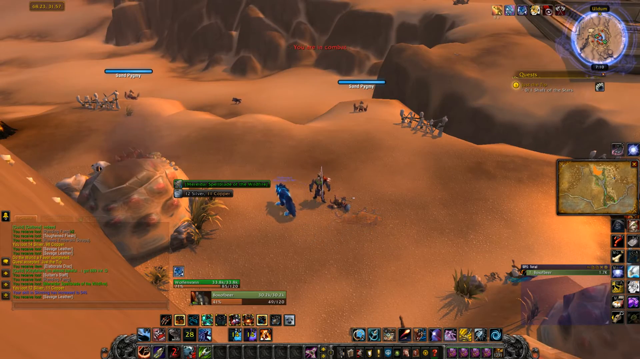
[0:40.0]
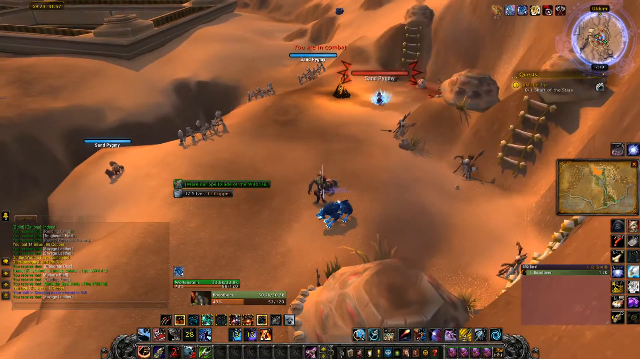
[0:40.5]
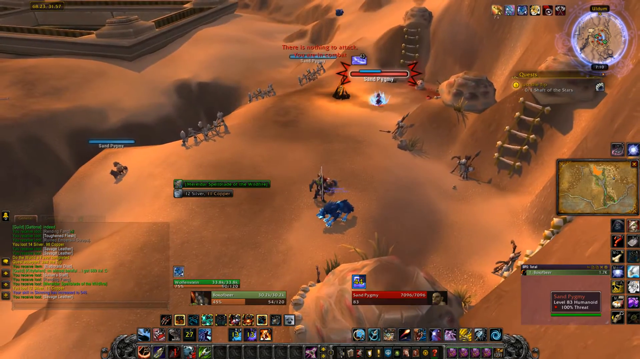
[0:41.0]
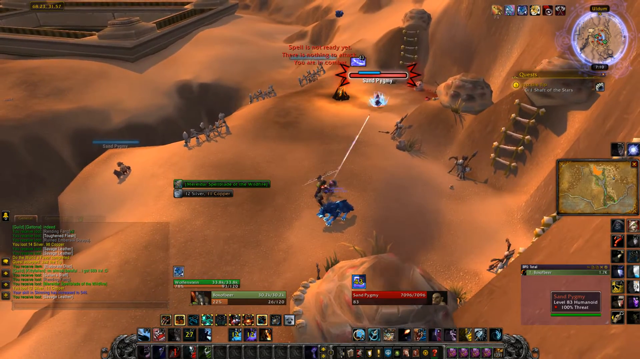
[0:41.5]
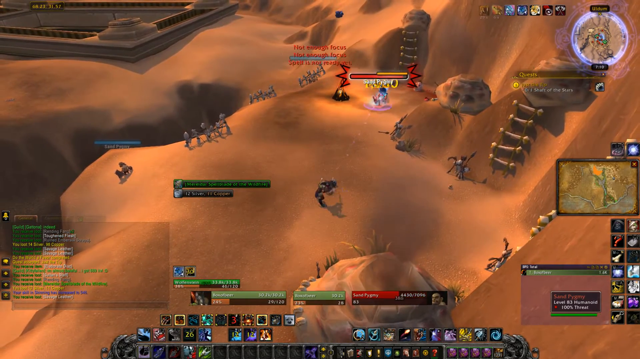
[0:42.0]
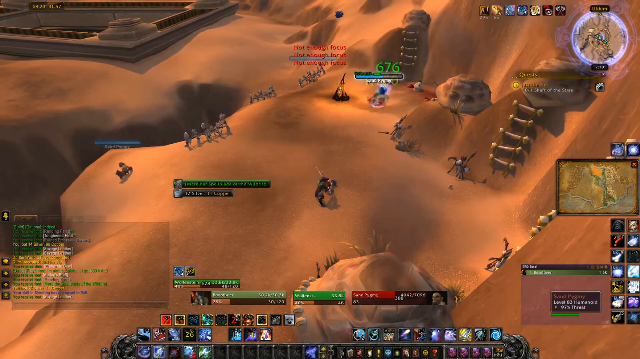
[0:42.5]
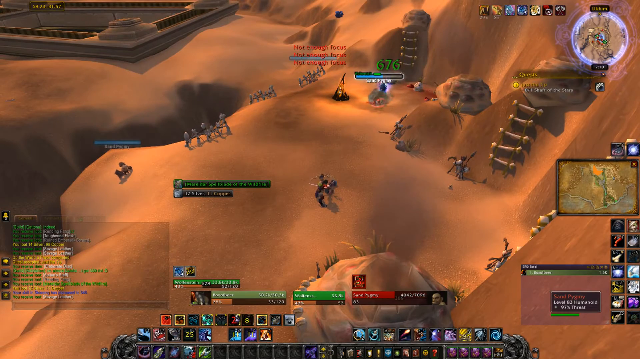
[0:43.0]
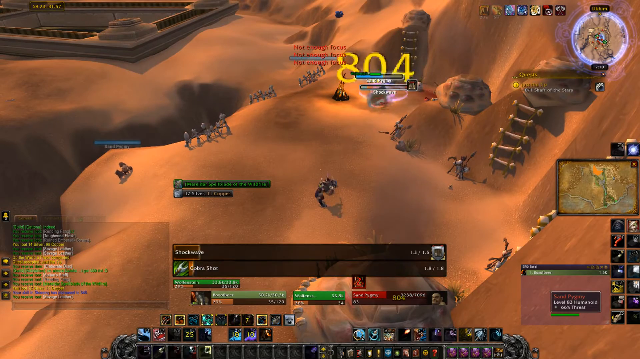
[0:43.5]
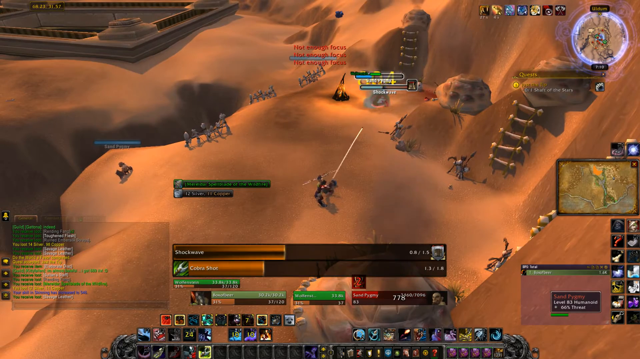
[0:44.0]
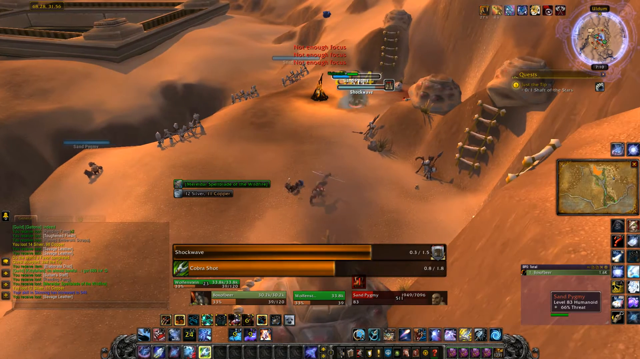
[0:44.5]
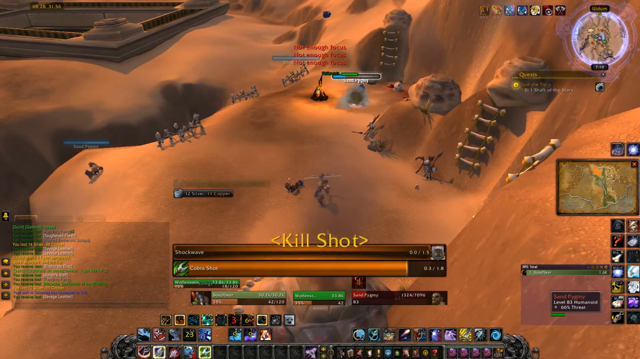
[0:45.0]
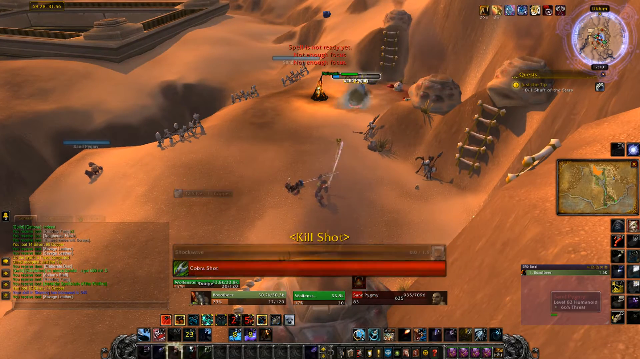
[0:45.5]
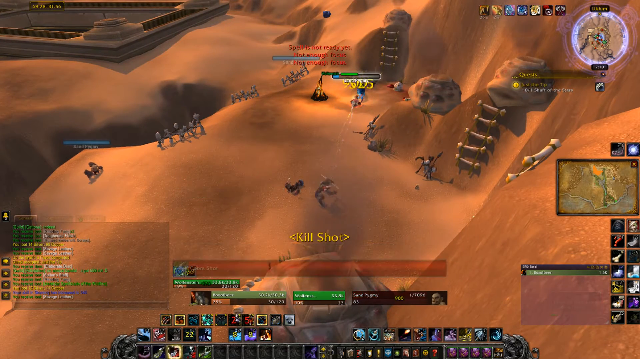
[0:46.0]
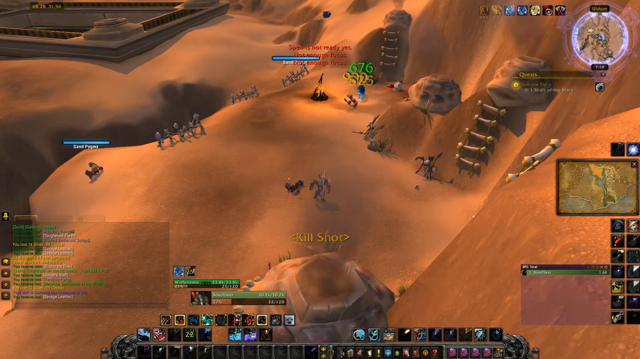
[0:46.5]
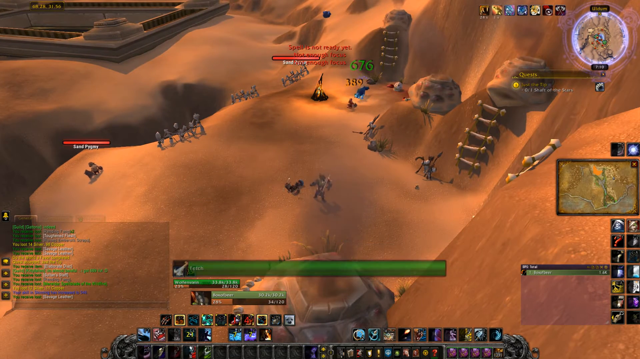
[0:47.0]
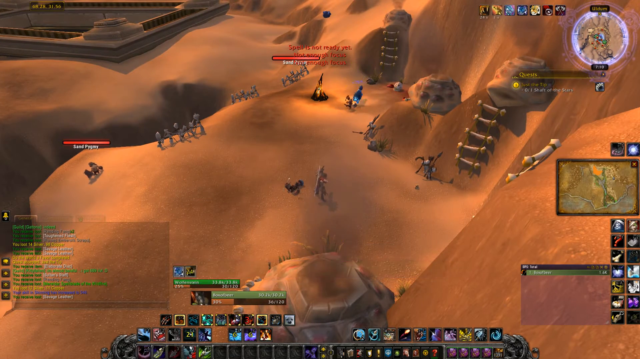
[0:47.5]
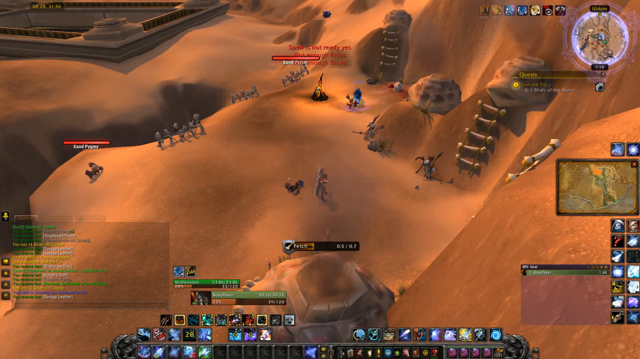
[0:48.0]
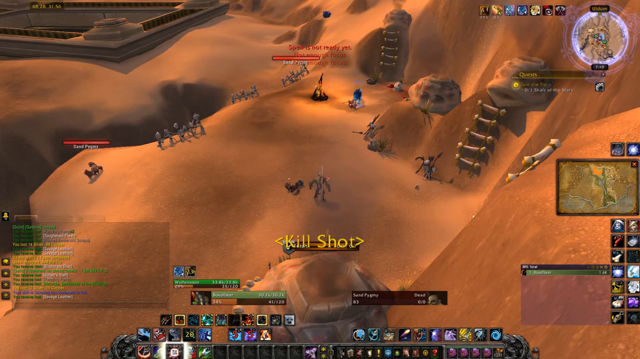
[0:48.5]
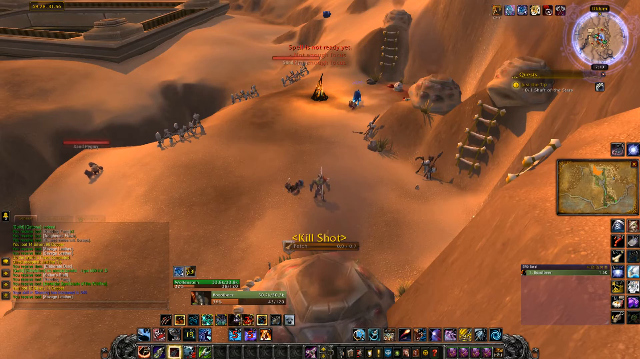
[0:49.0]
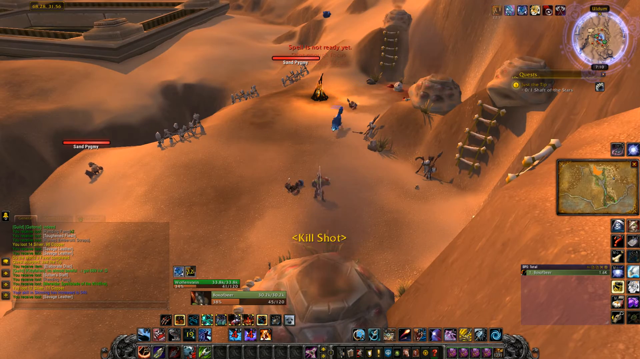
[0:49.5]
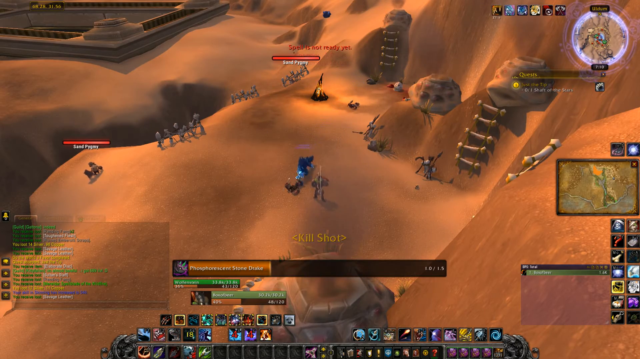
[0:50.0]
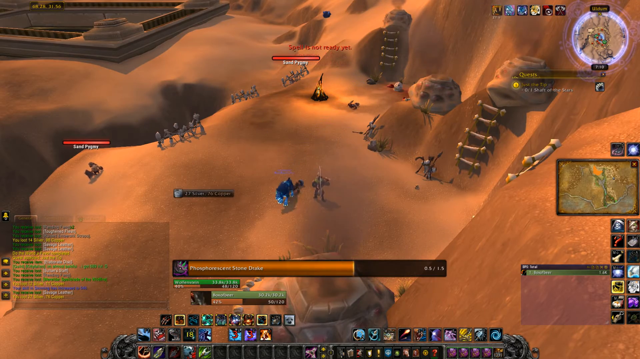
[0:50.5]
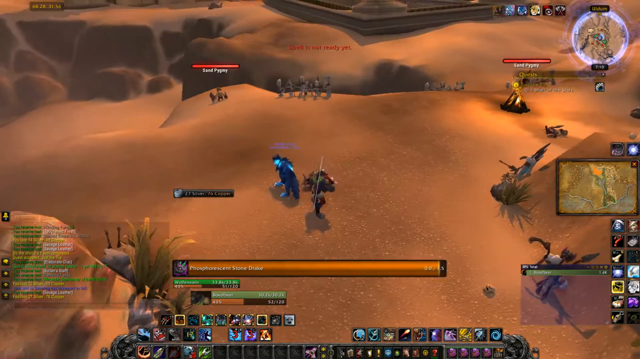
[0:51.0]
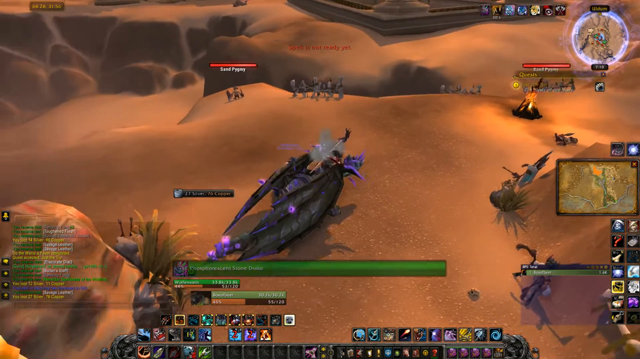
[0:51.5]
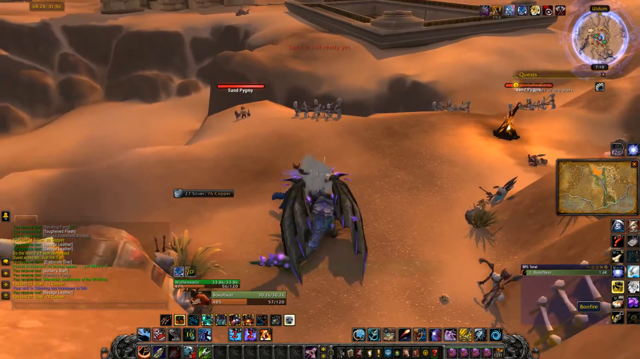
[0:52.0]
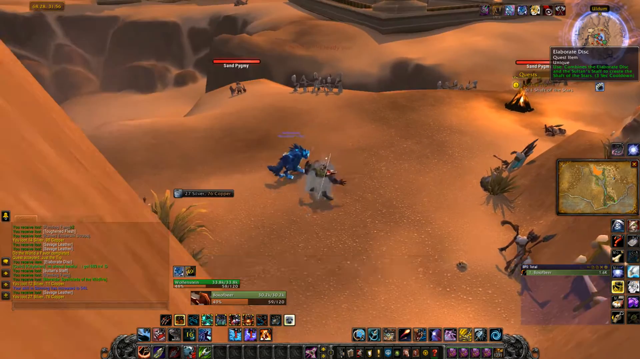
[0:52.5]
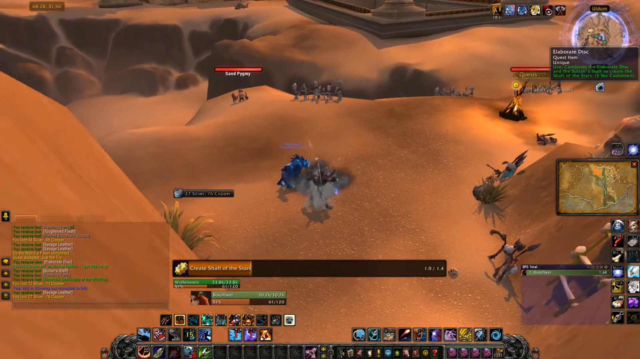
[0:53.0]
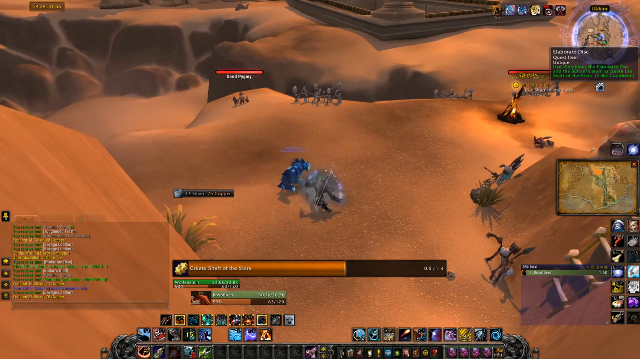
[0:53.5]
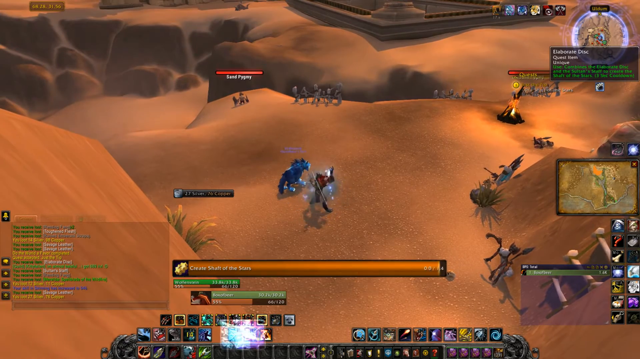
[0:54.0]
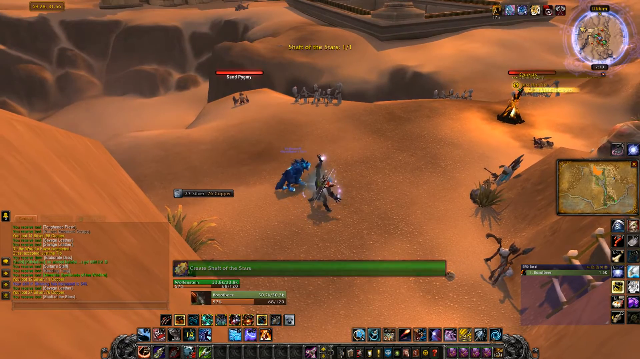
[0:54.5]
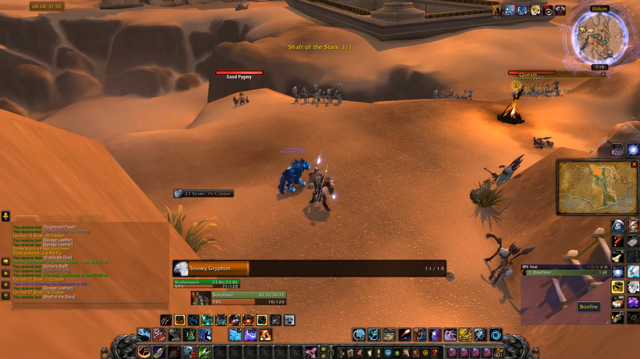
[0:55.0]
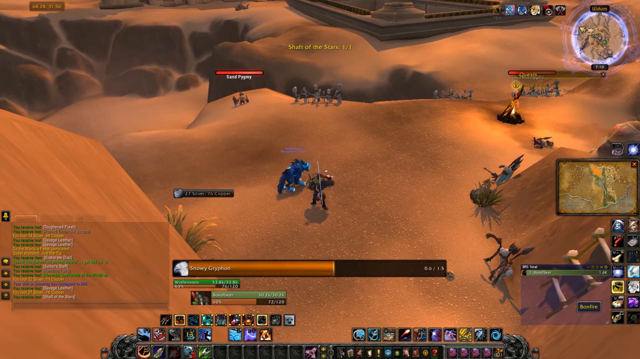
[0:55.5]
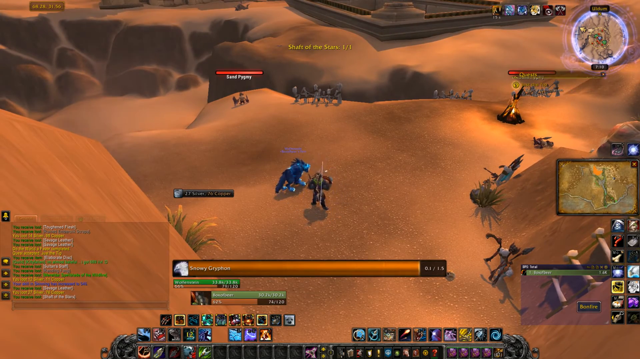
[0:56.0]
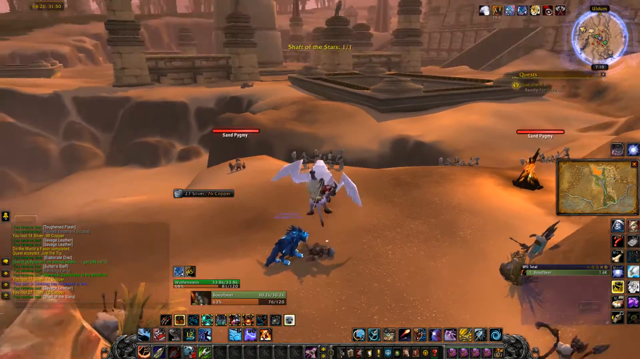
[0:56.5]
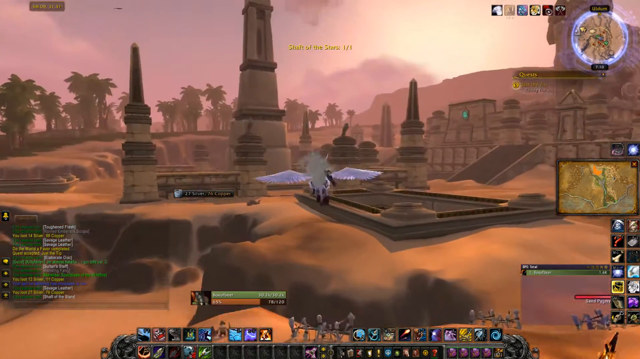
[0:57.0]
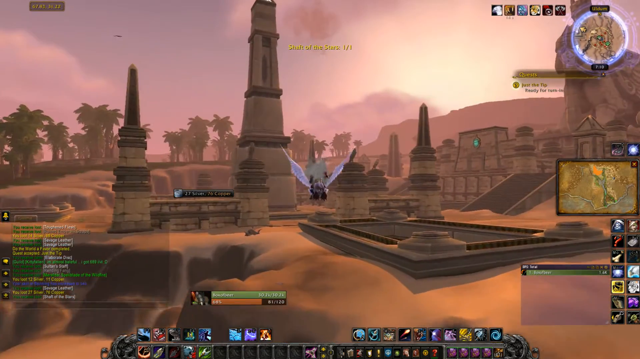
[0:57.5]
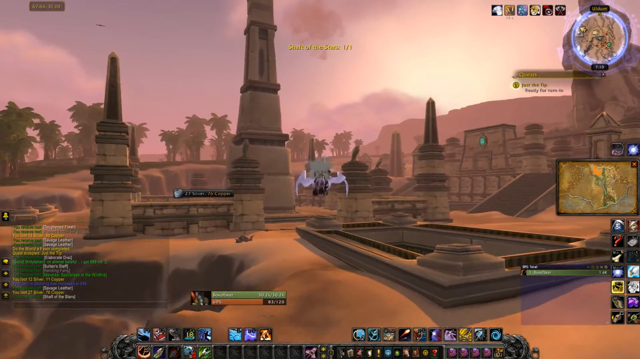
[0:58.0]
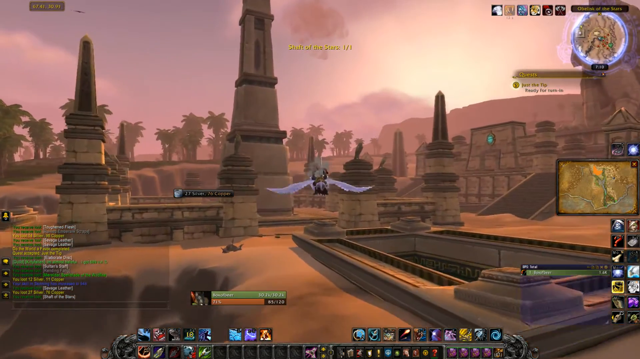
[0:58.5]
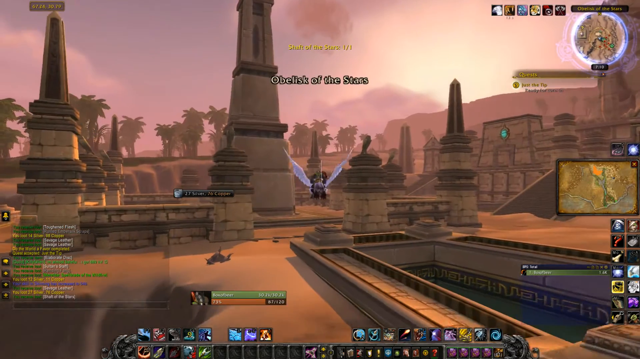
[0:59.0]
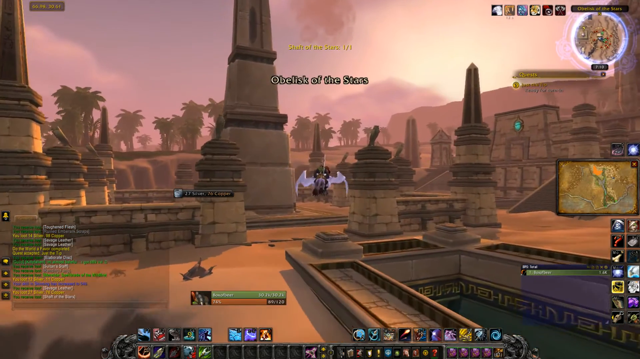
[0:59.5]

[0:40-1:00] The players are still on what appears to be the mountainside. One of the players takes a shot at its opponent, a score of 676 pops up and then a score of 804, and after the shot the words "kill shot" pop up. In the background is a ladder on the mountain that appears to be made of bones and twine. Some weapons seem to be scattered around the mountain. There are at least three ladders leading up the mountains, made of bone and twine or some sort of cord attaching the bones together. The mythical creature then pops into the scene and turns from a creature into a man, then turns back into a creature and flies away. In the air the creature is white; on the mountainside it was blue.